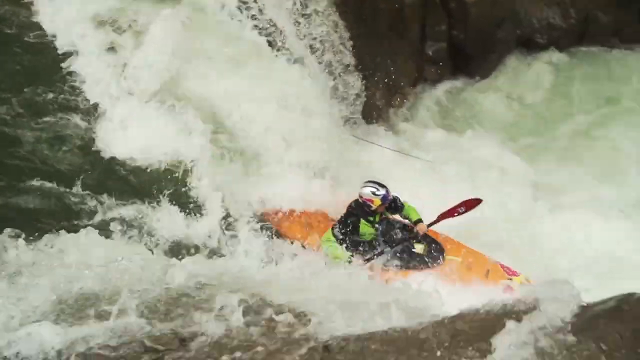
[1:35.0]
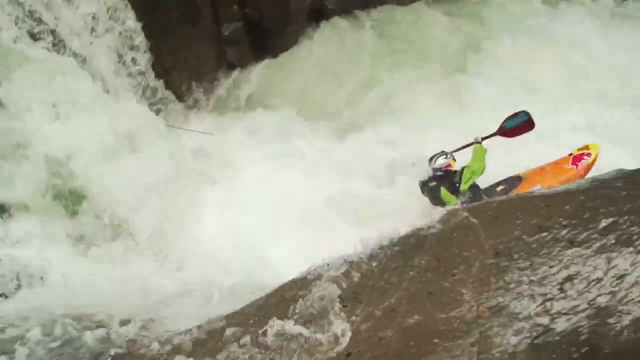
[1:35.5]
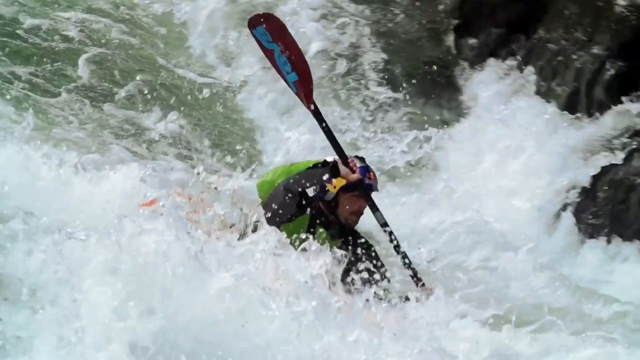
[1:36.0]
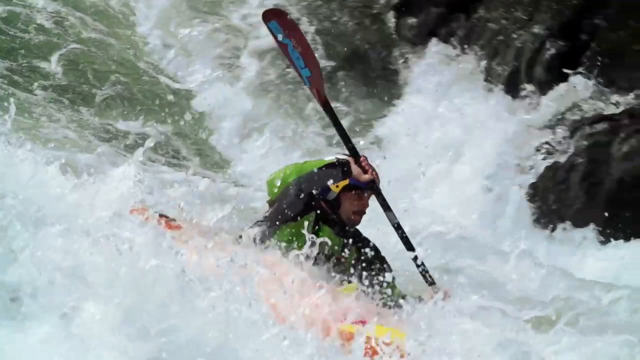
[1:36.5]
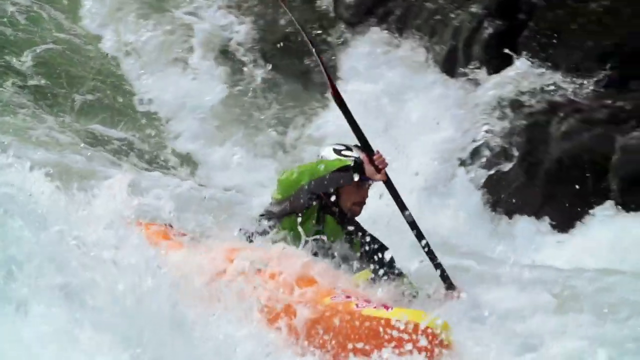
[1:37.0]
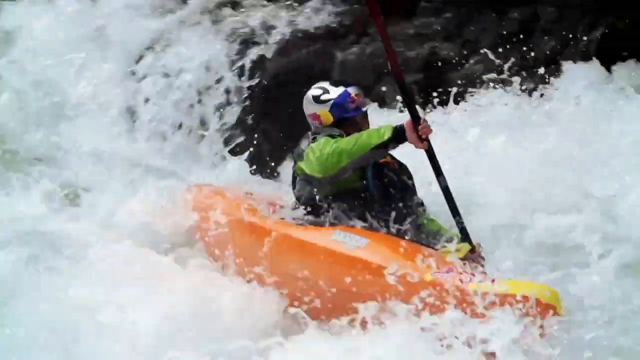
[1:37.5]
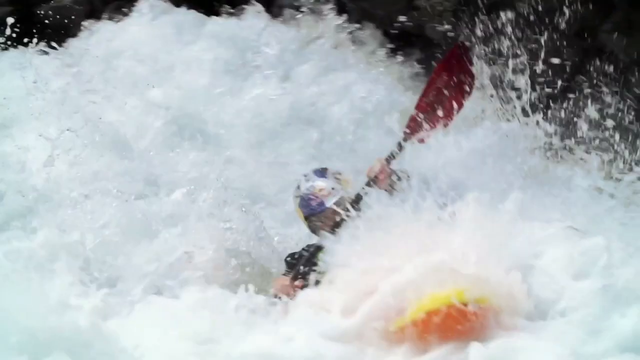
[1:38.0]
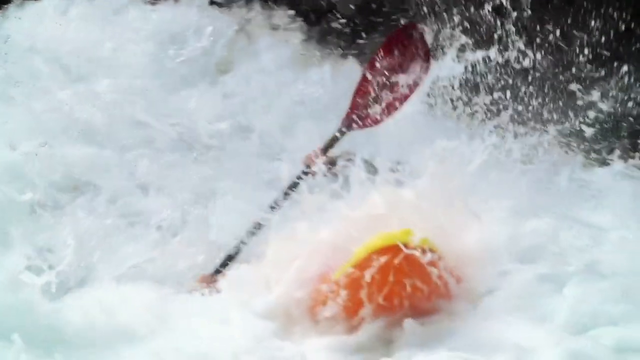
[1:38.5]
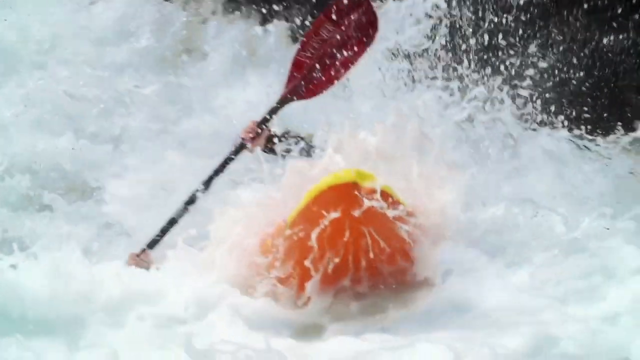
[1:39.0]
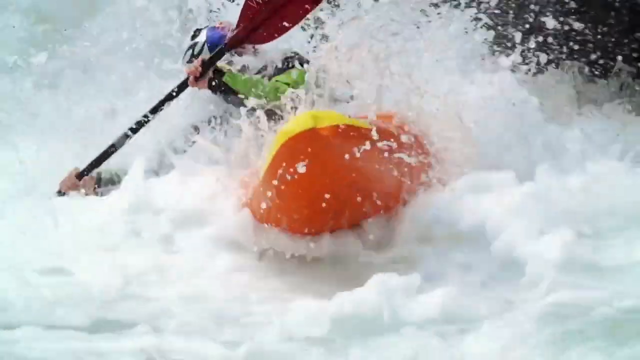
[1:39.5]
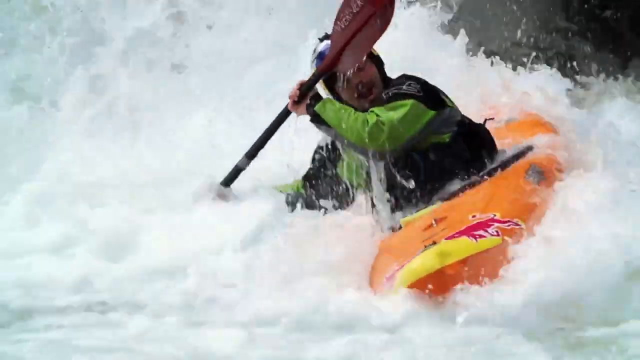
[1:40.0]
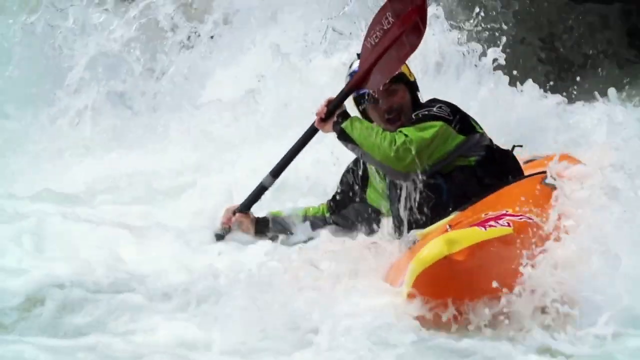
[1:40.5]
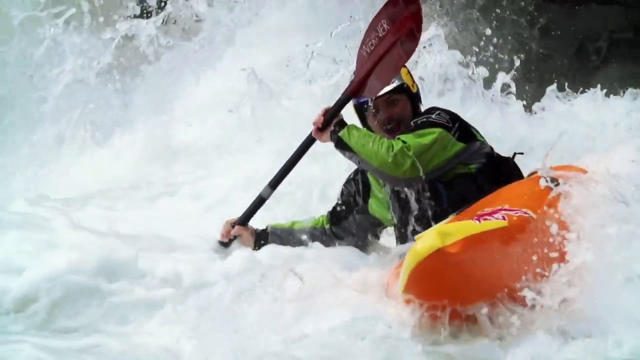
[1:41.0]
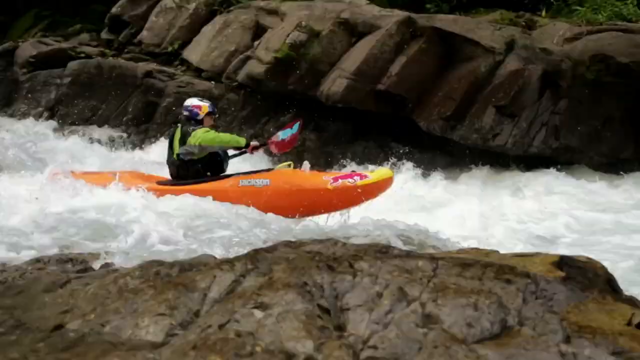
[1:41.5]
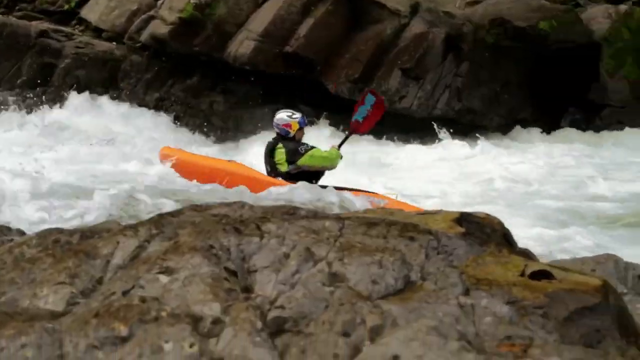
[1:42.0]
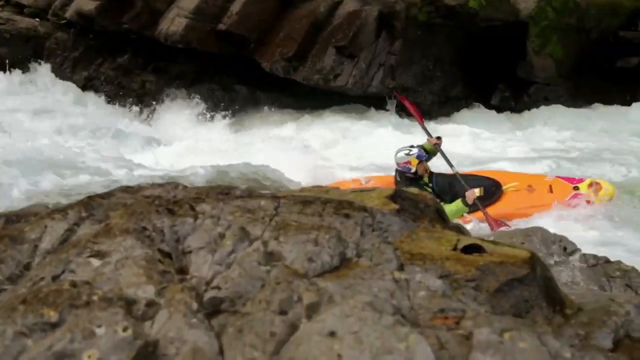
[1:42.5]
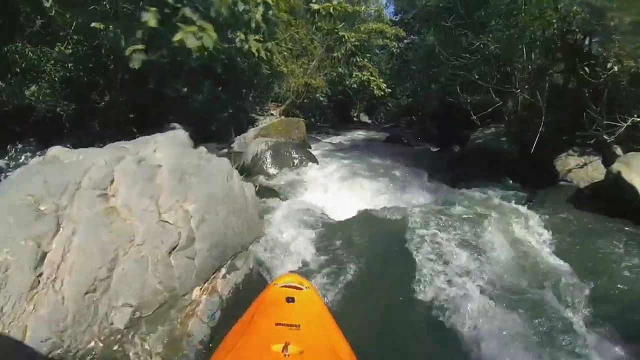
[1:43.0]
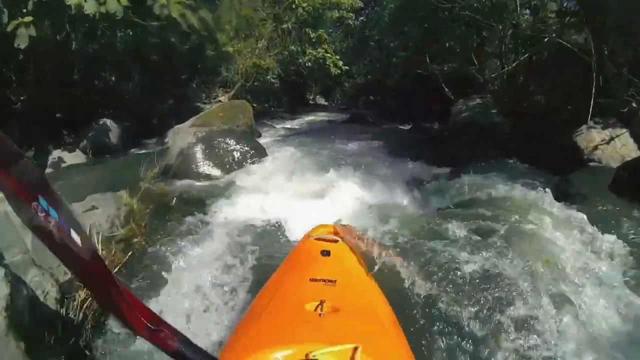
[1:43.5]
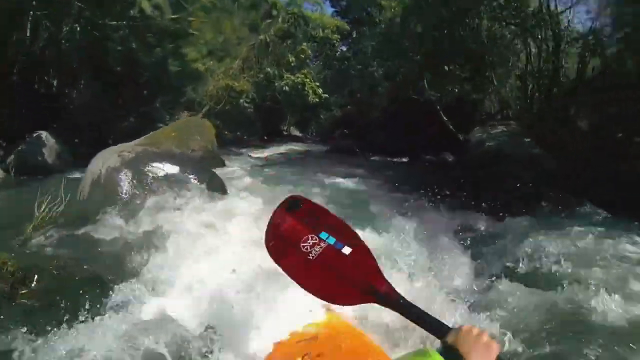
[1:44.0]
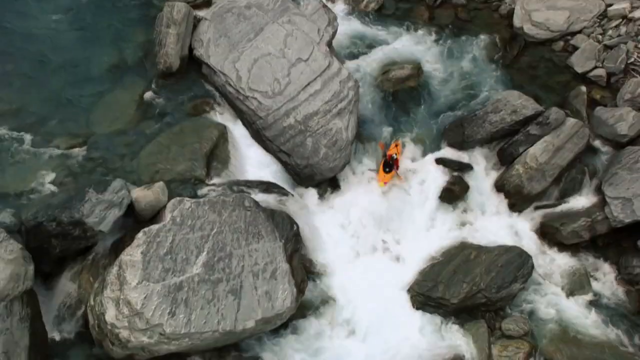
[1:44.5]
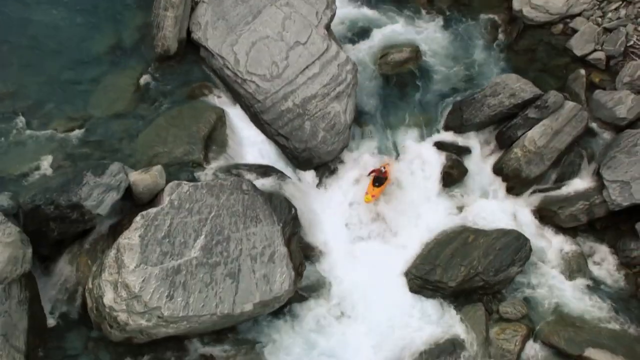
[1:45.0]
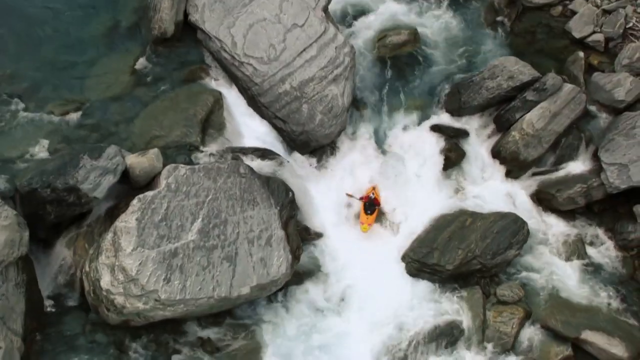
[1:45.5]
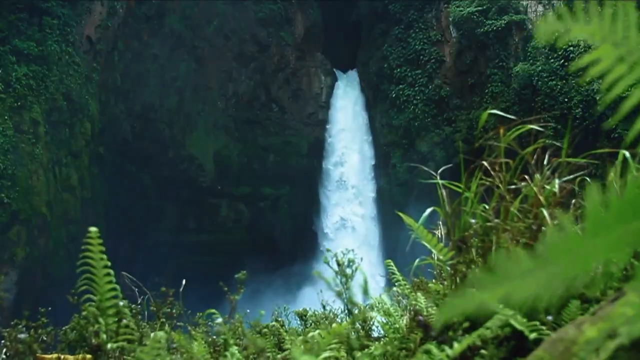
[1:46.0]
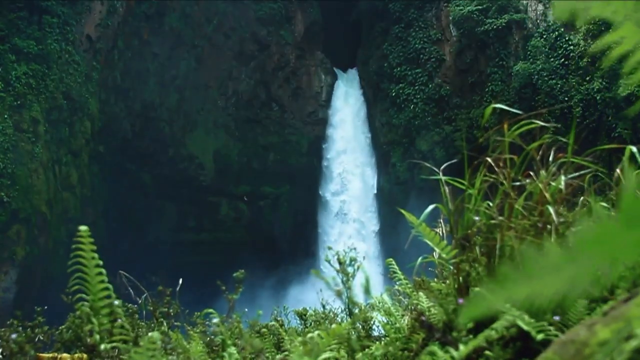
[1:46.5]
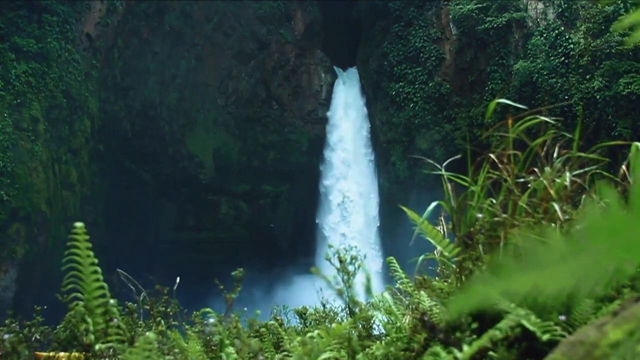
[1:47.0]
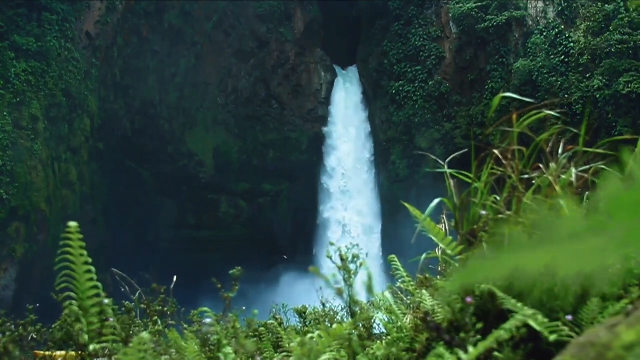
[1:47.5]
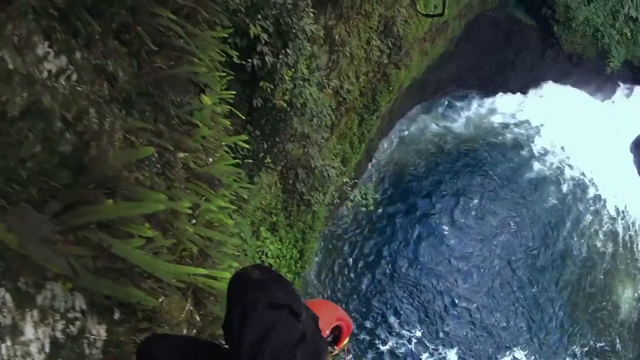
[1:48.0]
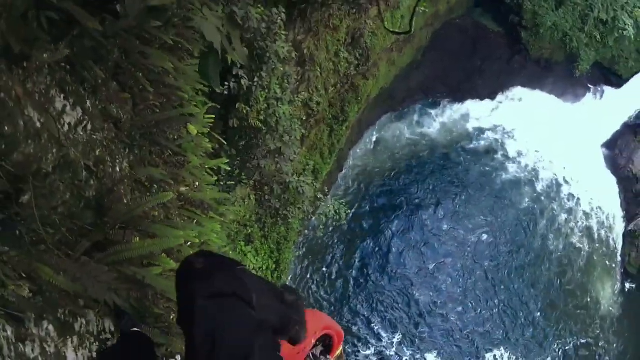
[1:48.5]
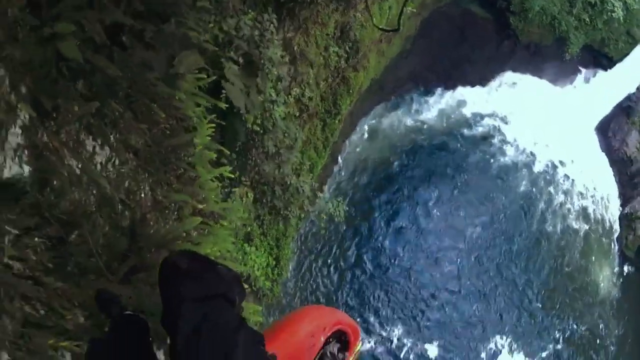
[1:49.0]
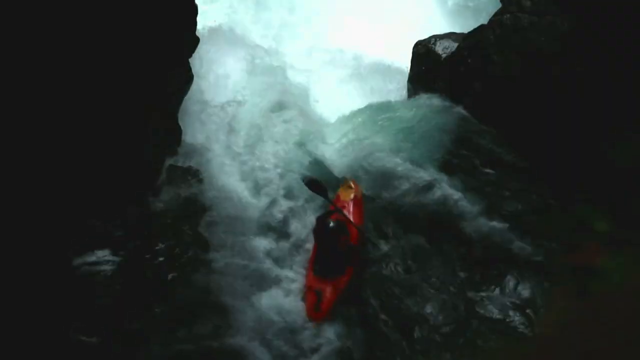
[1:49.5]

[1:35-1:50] Scenes of rough river kayaking are shown, some from an angle looking downward from a high position and others almost first-person from the view of the kayaker, intercut with shots of the surrounding region. The Red Bull logo is in the bottom right corner. A man in an orange kayak, wearing a green and black wetsuit jacket, paddles through various portions of the river, where the water is almost white from the crashing waves. In the first-person view he goes through choppy water among rocks in what looks like a very narrow passageway, and then a view from very high above makes him look very small and the gap between the rocks look even tinier. A waterfall then pours down into a very deep hole of water.